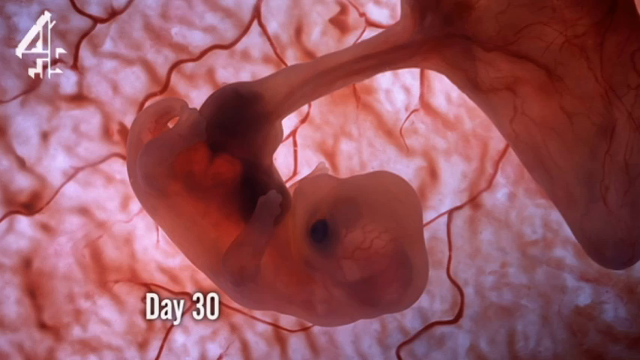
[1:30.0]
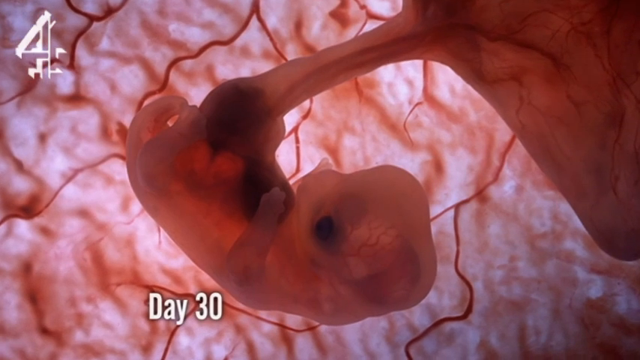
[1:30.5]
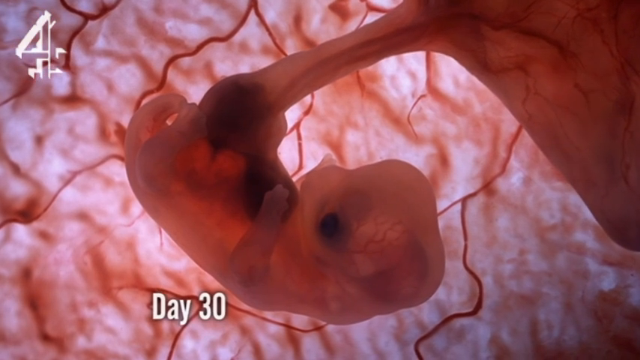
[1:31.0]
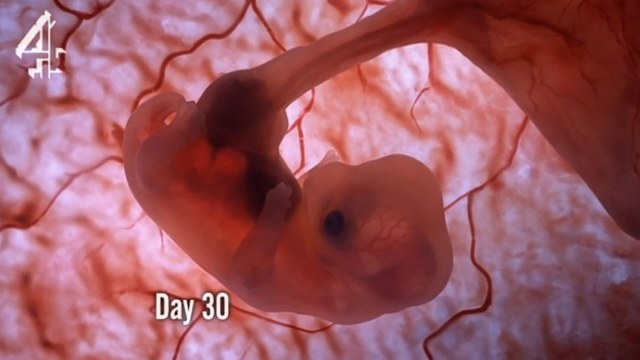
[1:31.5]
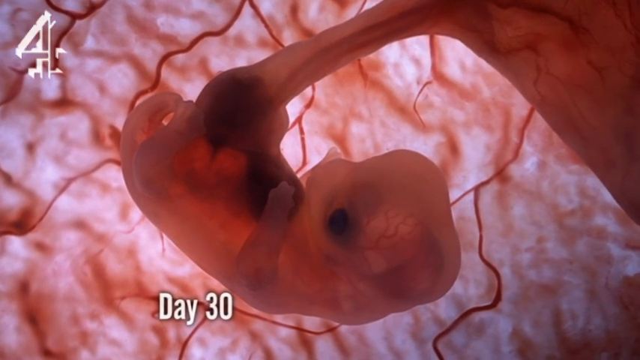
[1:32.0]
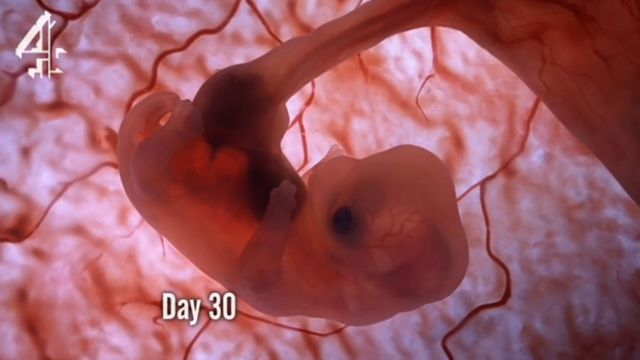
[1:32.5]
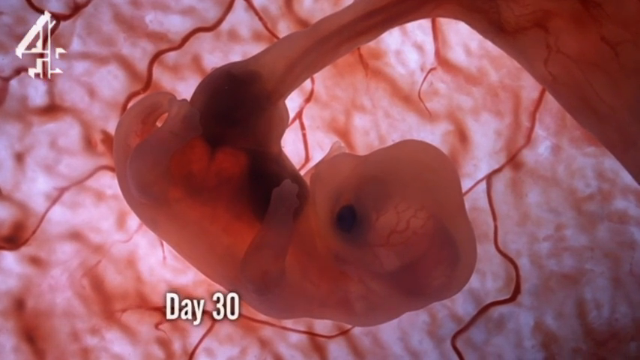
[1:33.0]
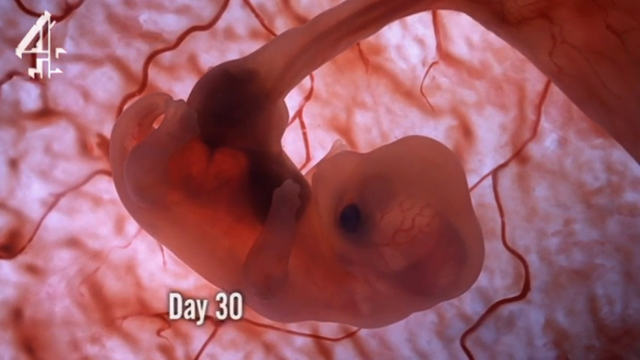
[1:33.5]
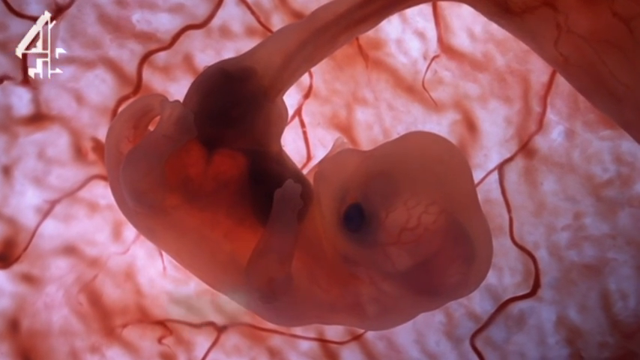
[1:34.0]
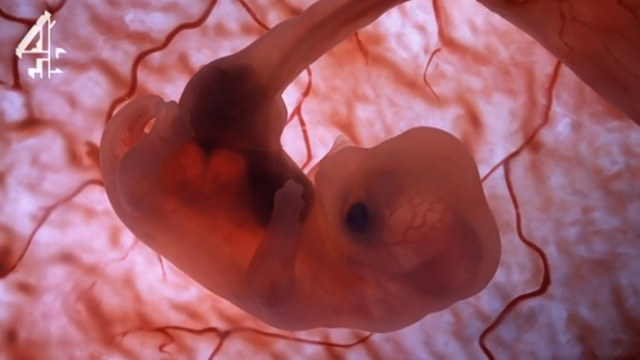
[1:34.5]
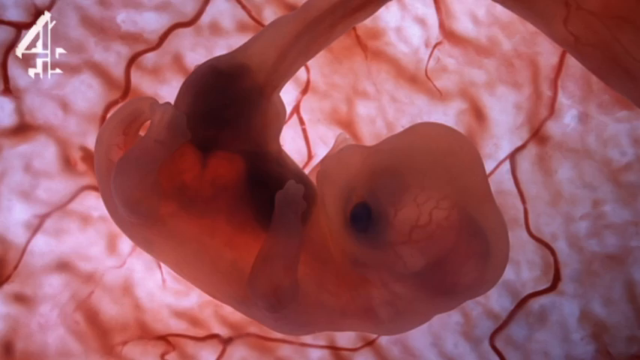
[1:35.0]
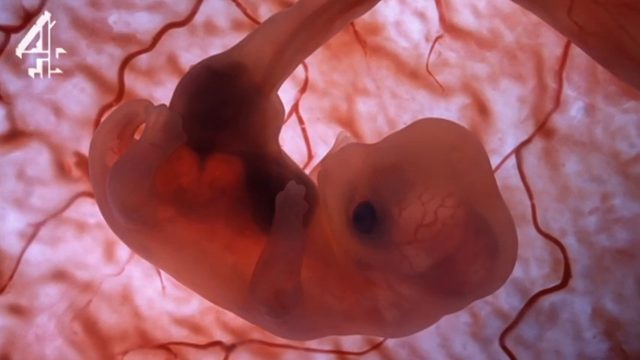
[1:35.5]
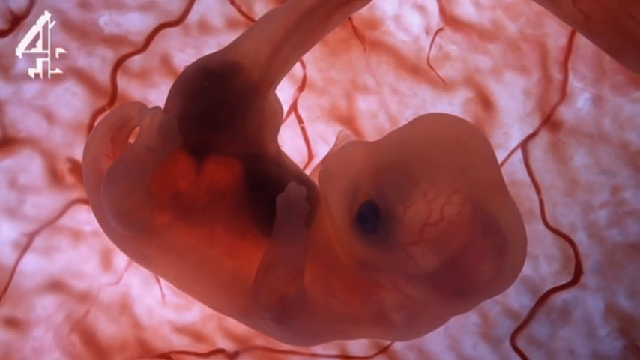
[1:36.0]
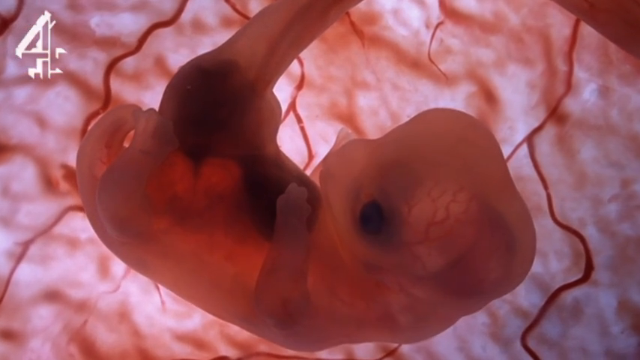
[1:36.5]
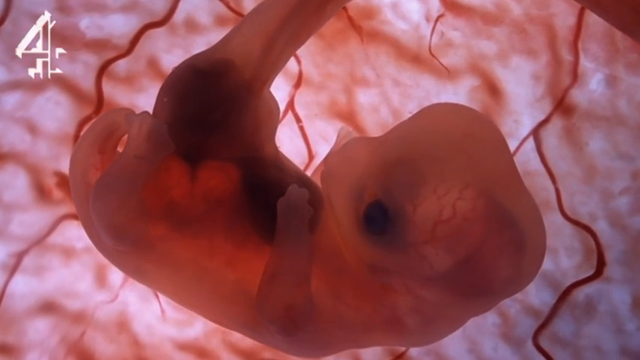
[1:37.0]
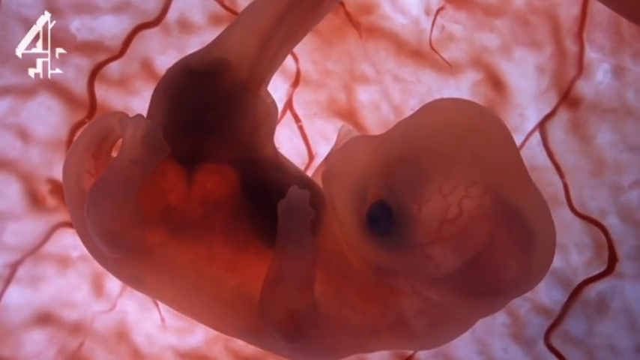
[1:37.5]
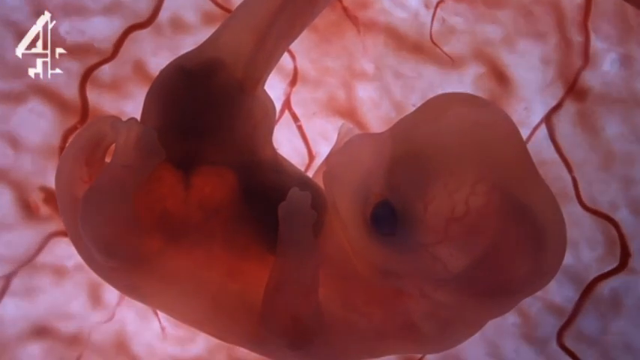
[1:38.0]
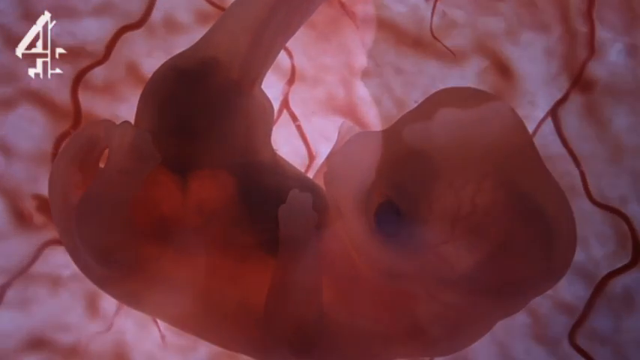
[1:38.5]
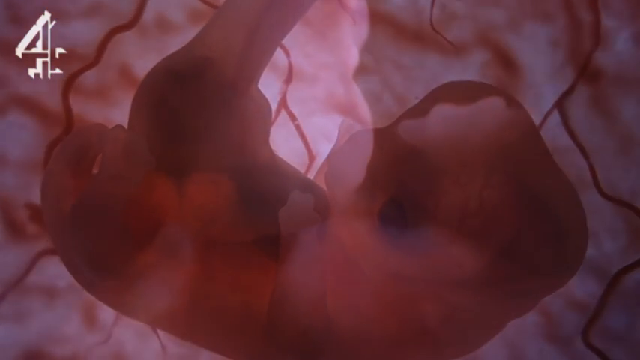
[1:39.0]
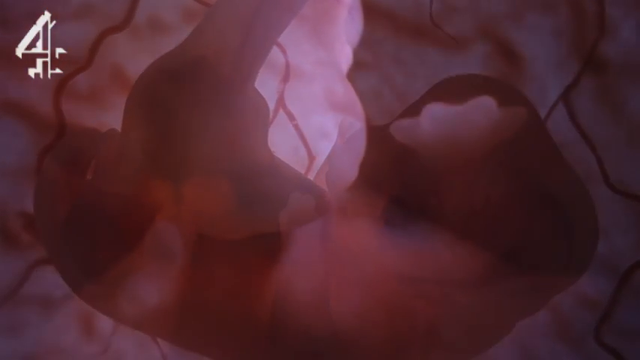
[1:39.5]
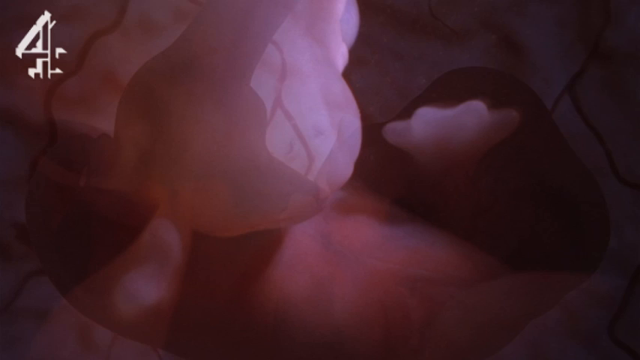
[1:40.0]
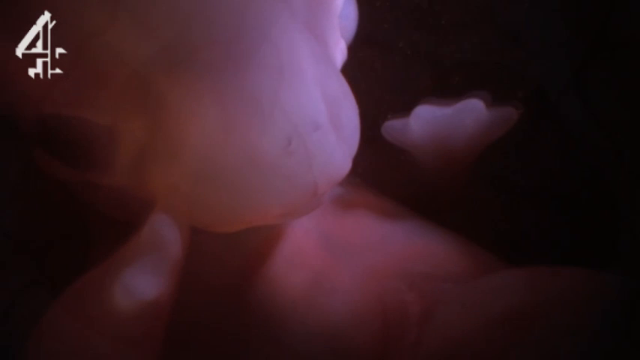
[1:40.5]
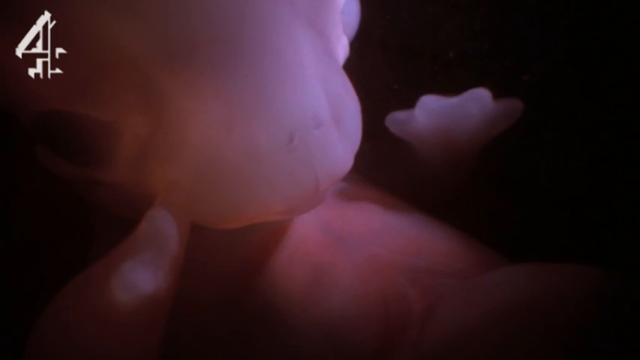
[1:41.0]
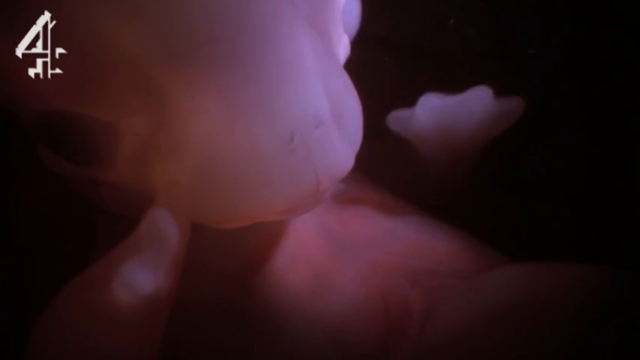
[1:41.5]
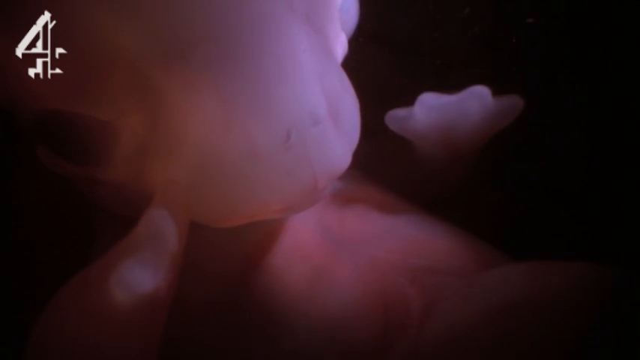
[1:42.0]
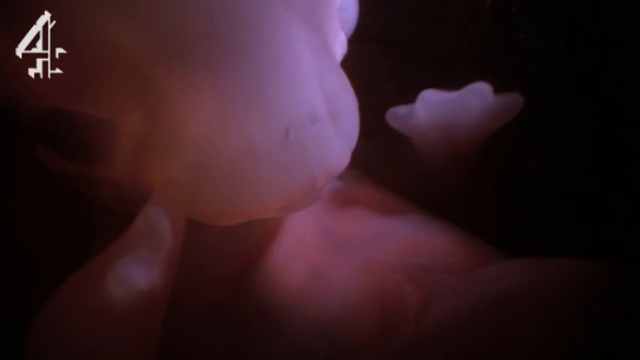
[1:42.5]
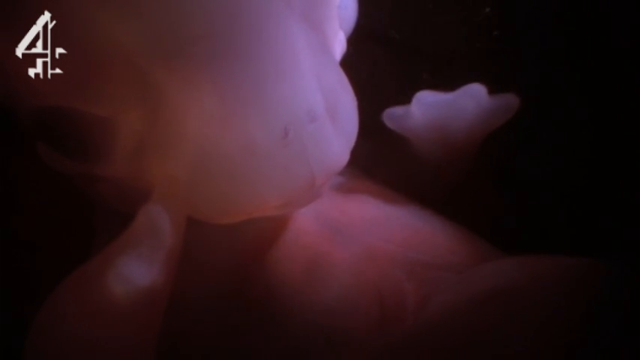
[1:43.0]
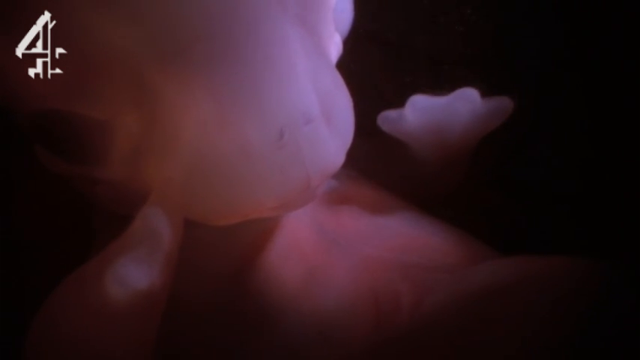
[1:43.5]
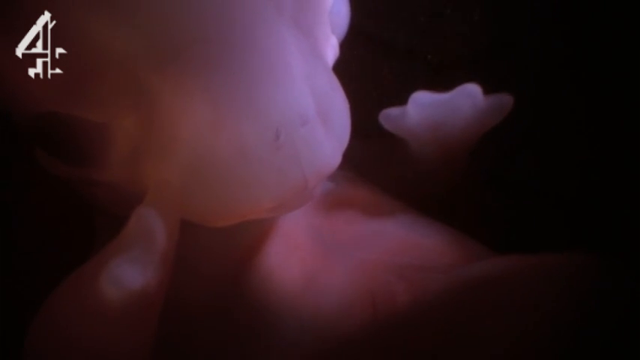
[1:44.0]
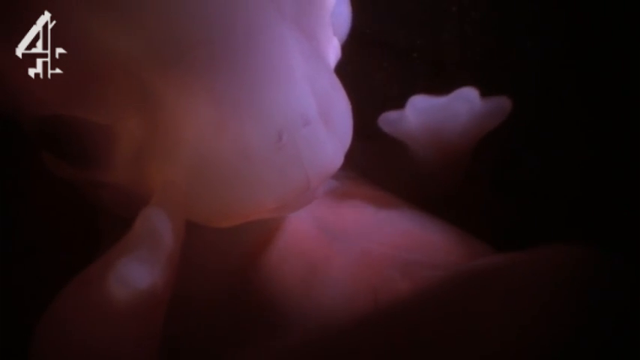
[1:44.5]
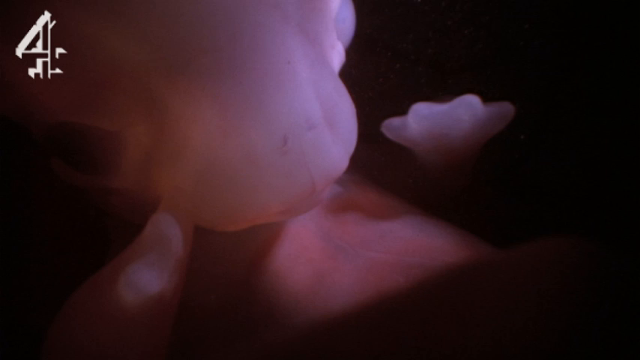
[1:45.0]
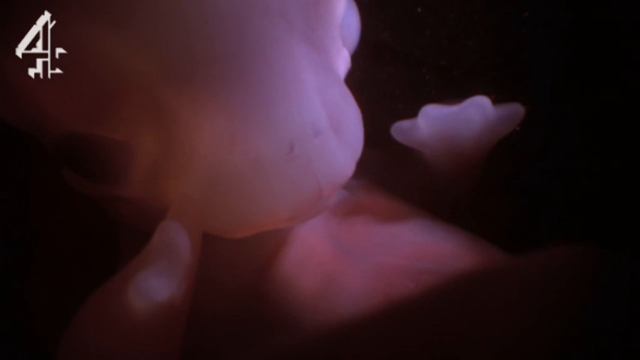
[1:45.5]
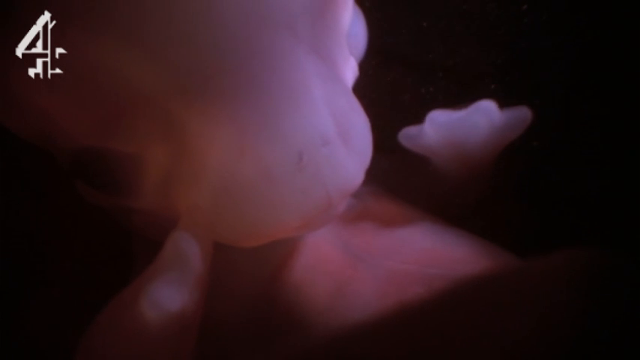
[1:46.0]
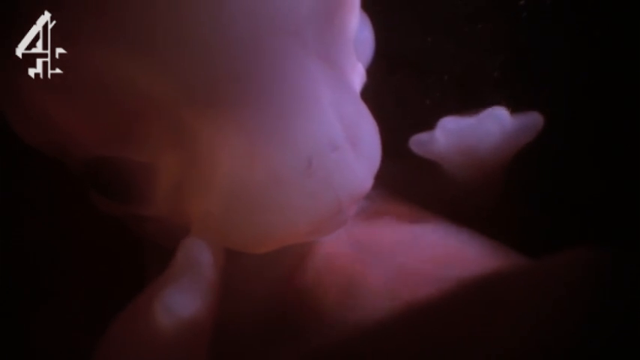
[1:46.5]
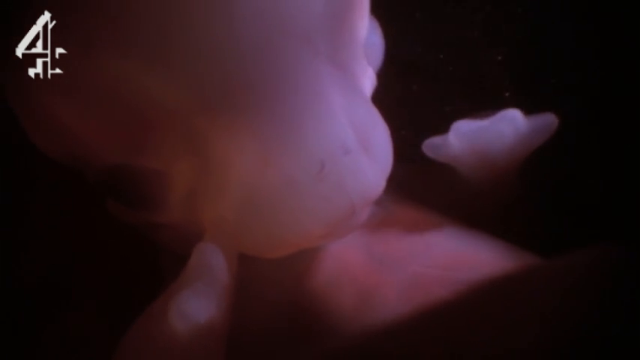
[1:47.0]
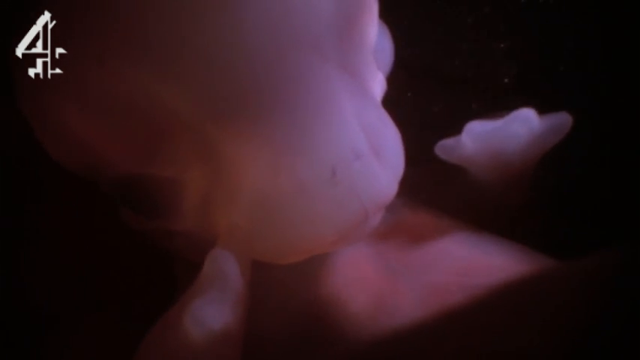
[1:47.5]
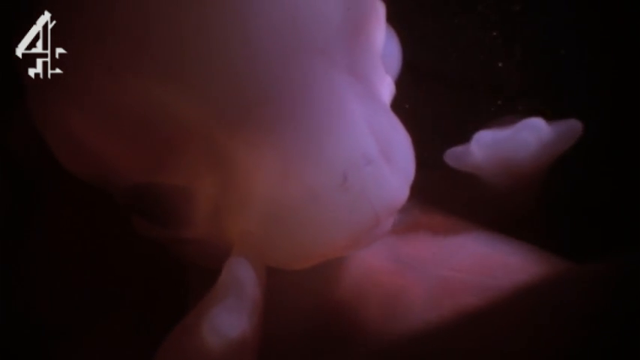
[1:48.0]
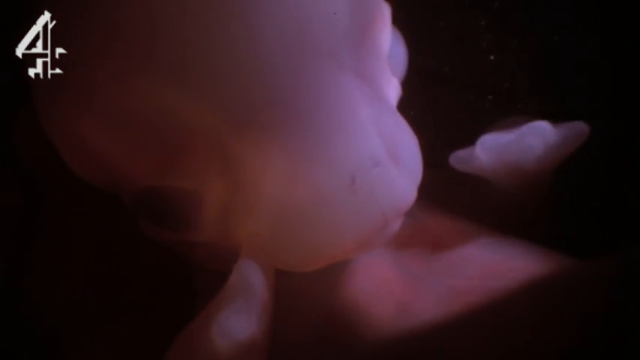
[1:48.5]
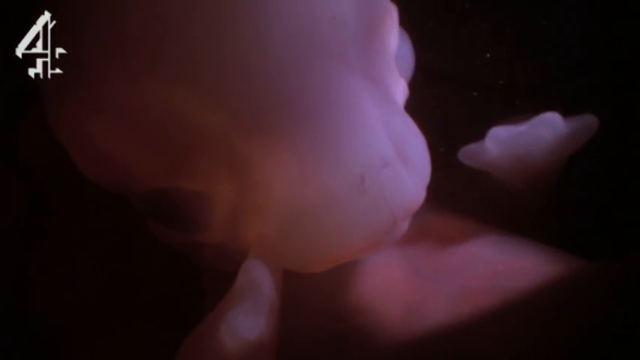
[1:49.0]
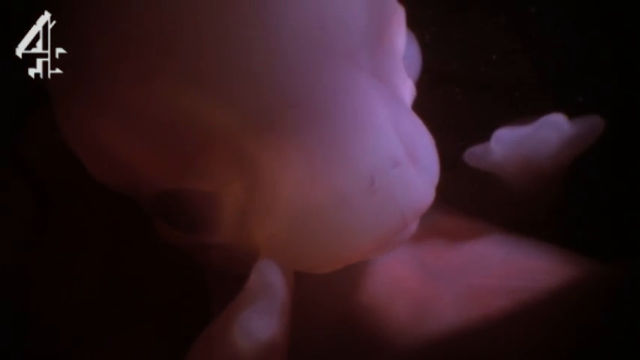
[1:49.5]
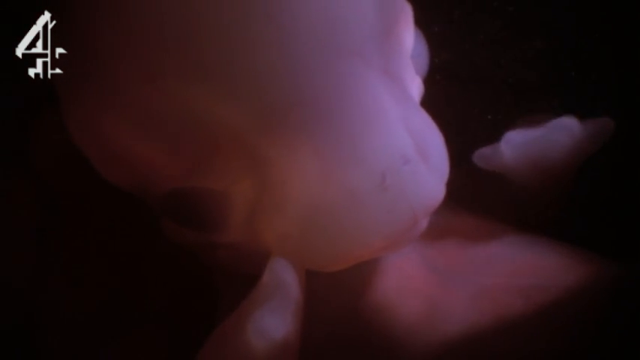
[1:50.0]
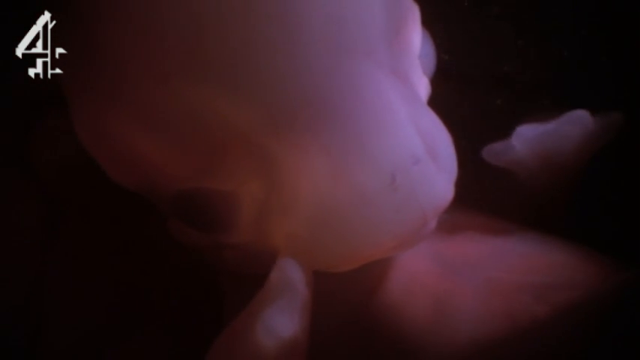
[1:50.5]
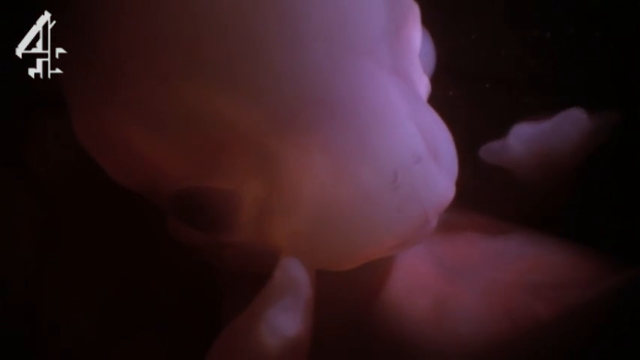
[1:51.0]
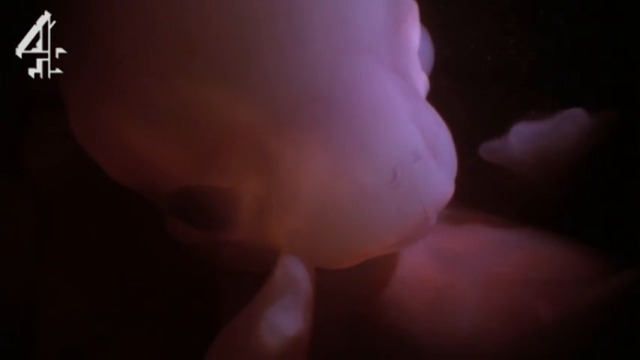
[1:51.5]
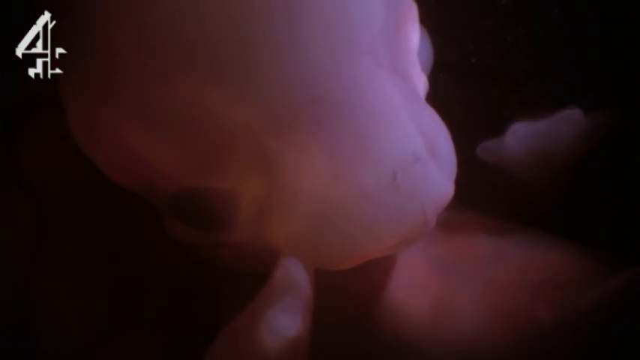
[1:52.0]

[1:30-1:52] The object is upside down, with its larger end facing the bottom right. A small object goes toward the front. A round black circle could be the eye. A white area seems to be moving up and down. Multiple misshapen white items are around the screen. A large white object comes from the left corner down to the middle of the screen. There is a four in the top left corner. There are multiple views of the light white-pink object; the middle of the solid area is white and moves up and down in a rhythmic, pulsating way while the original item is forming. At the top left corner, something that looks like a long item is coming out. A black substance inside the circular object connects the long tube to the object itself.